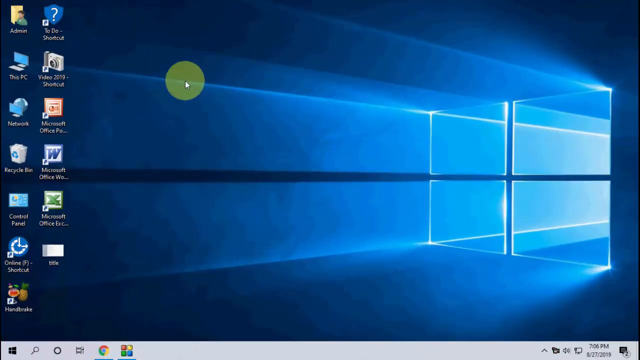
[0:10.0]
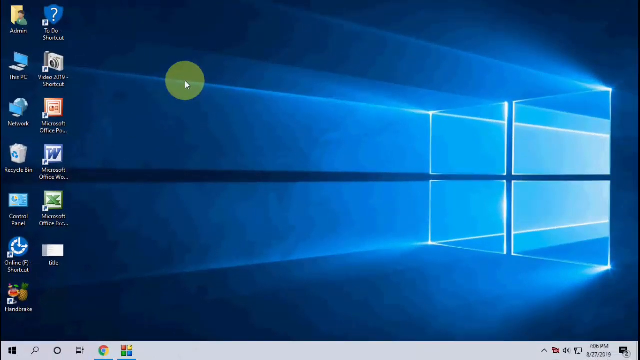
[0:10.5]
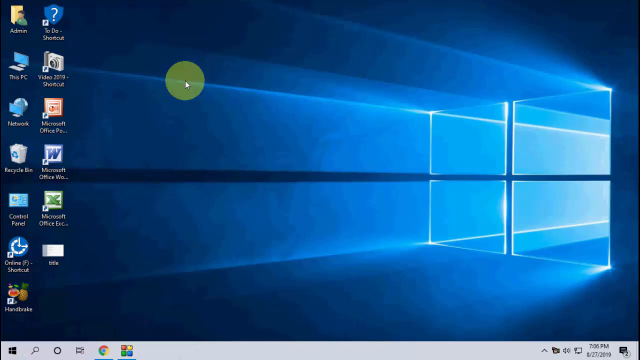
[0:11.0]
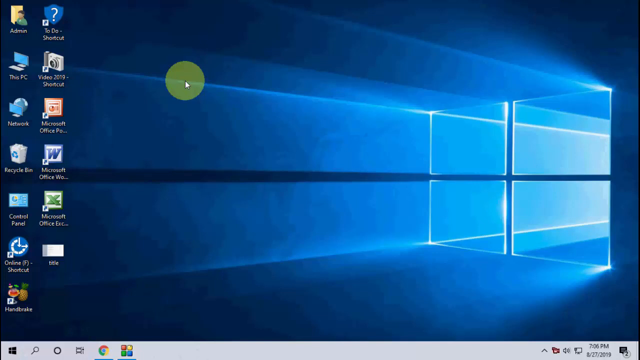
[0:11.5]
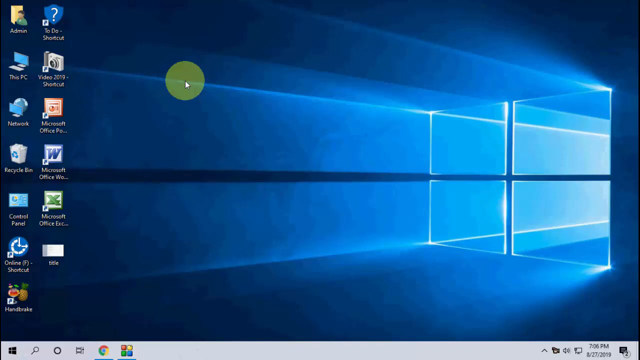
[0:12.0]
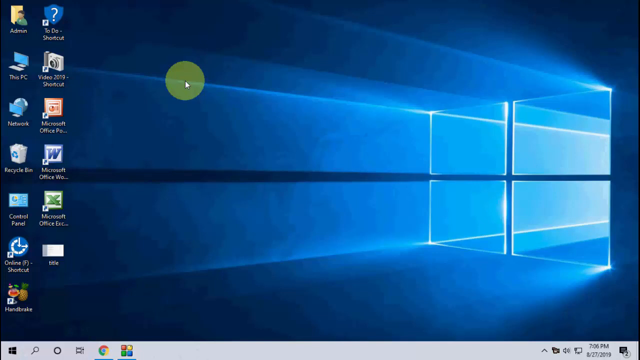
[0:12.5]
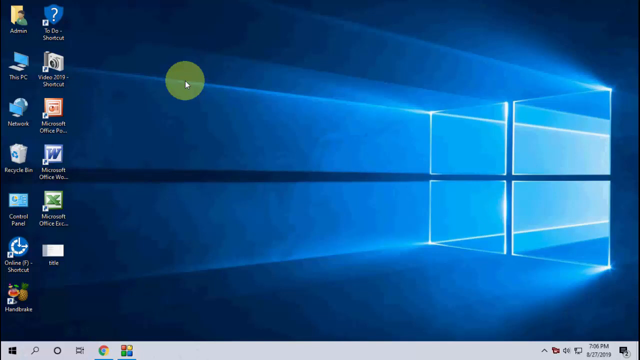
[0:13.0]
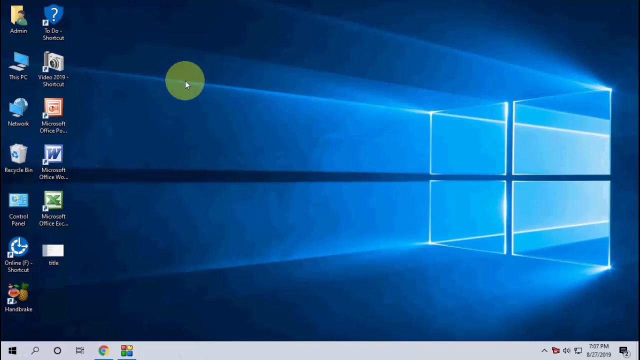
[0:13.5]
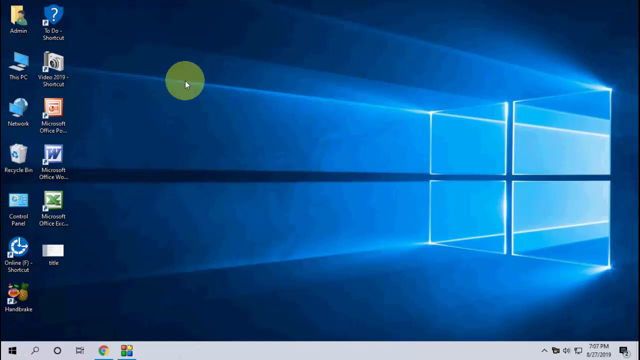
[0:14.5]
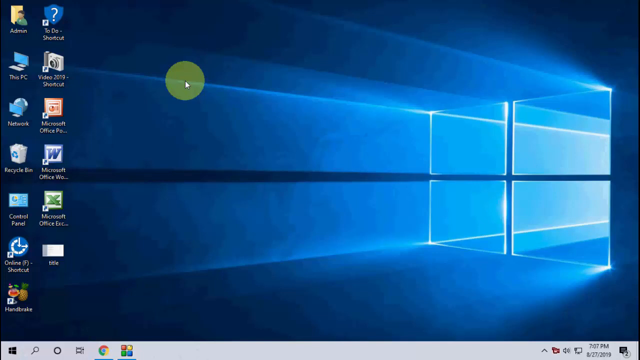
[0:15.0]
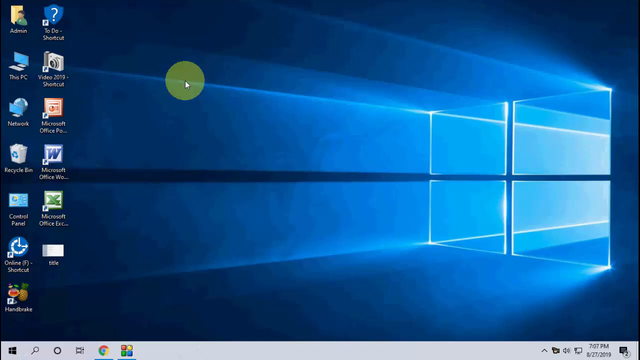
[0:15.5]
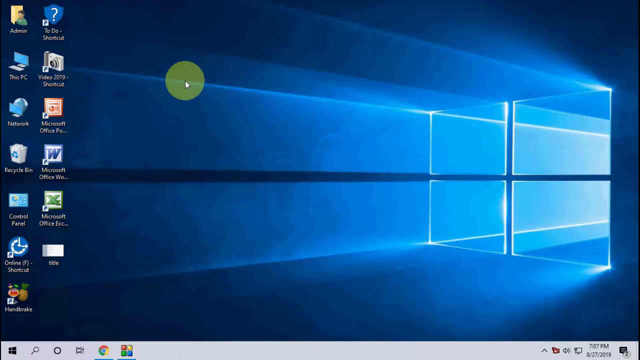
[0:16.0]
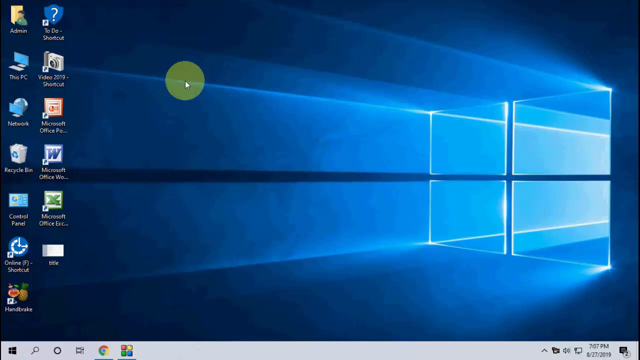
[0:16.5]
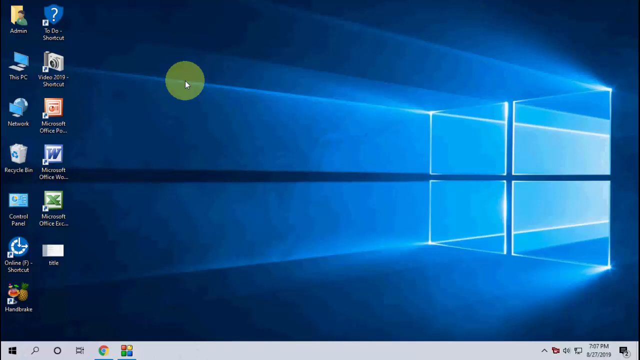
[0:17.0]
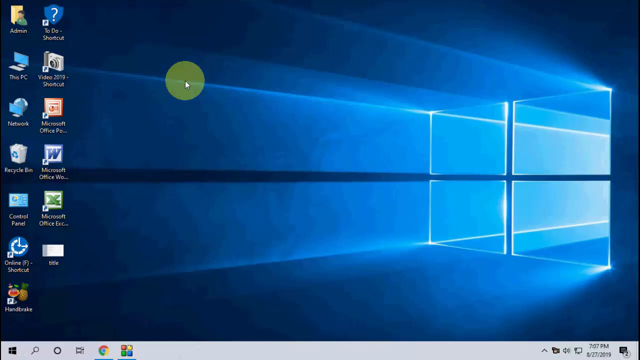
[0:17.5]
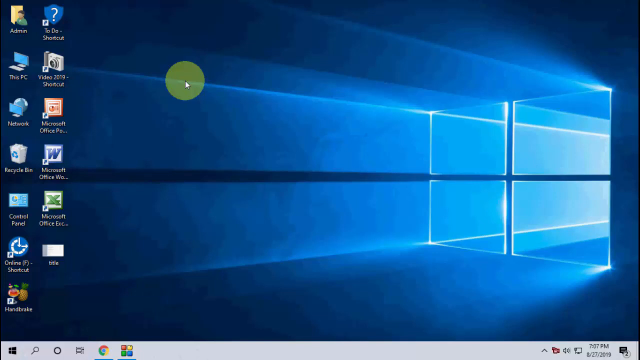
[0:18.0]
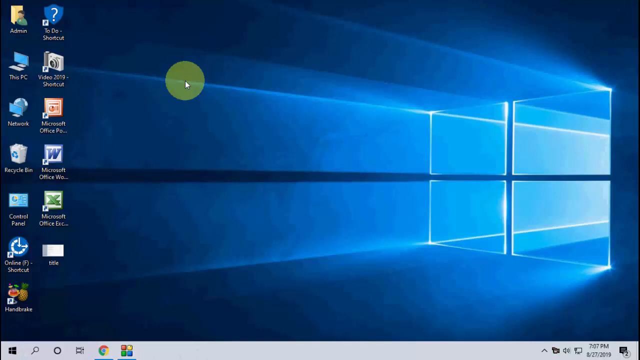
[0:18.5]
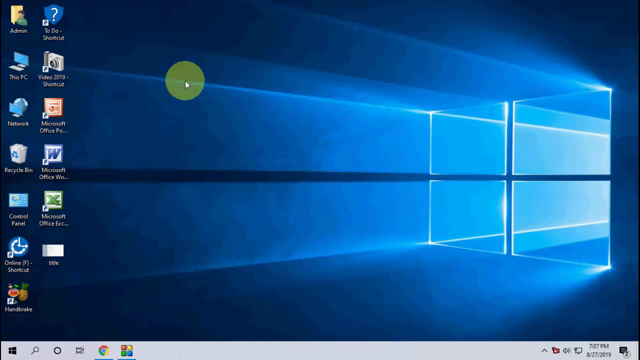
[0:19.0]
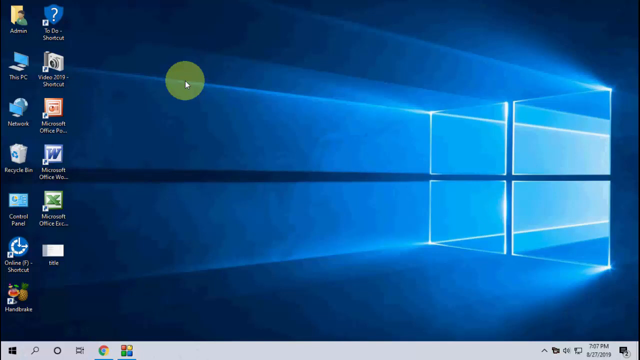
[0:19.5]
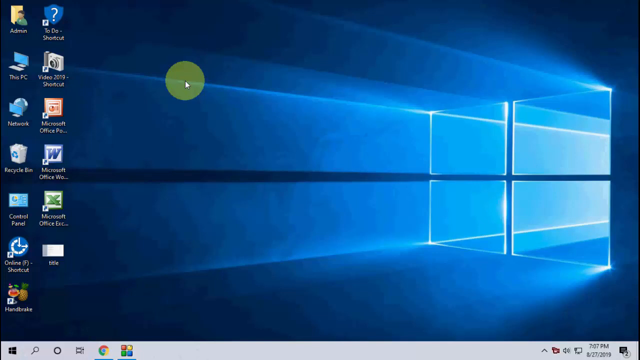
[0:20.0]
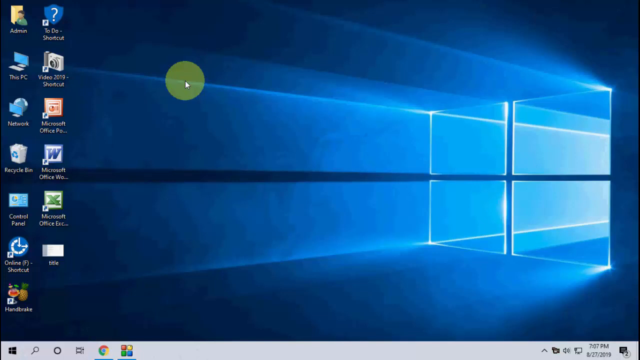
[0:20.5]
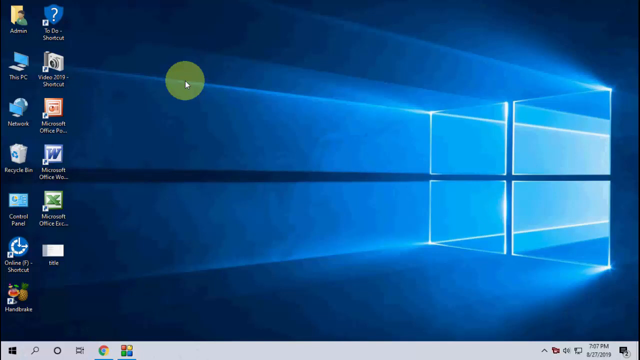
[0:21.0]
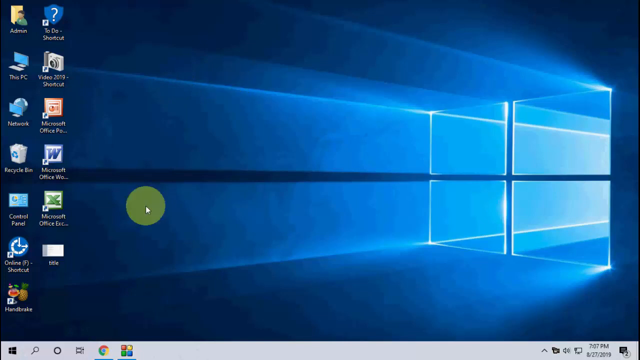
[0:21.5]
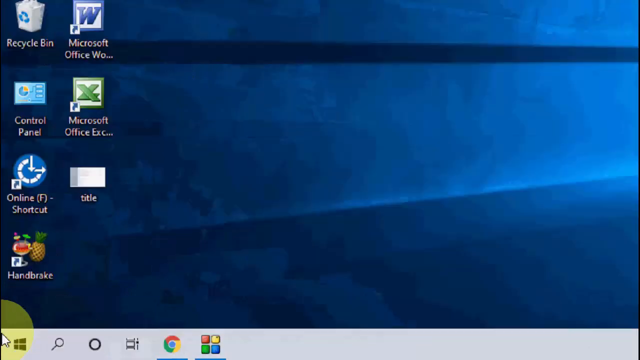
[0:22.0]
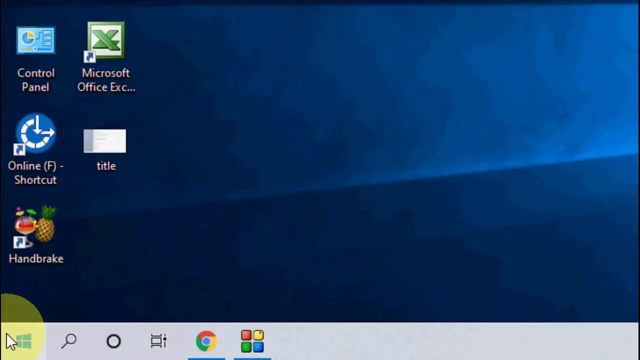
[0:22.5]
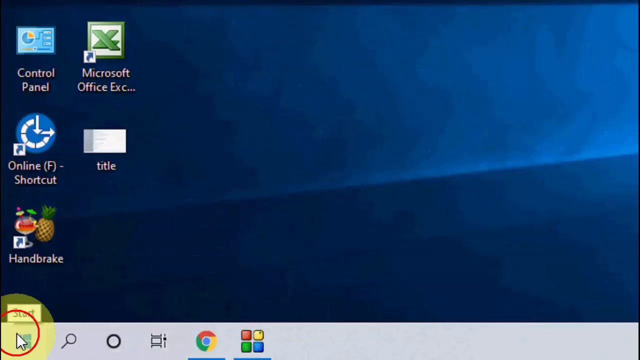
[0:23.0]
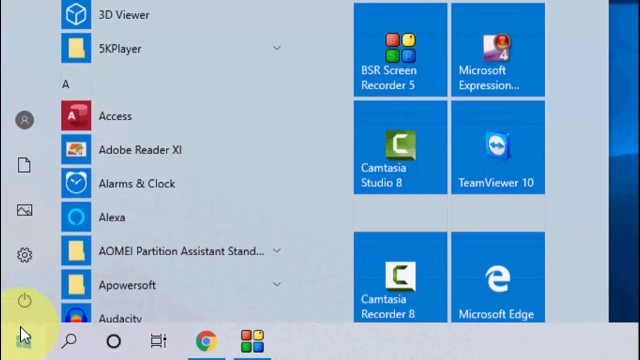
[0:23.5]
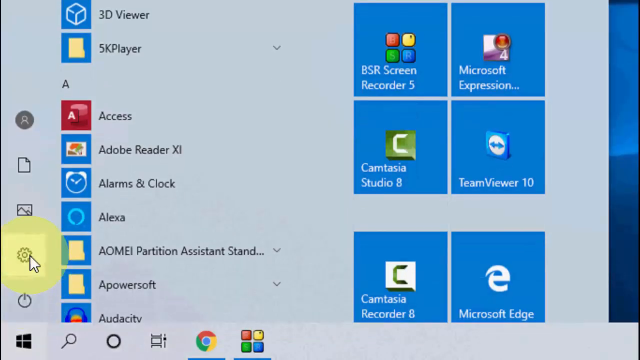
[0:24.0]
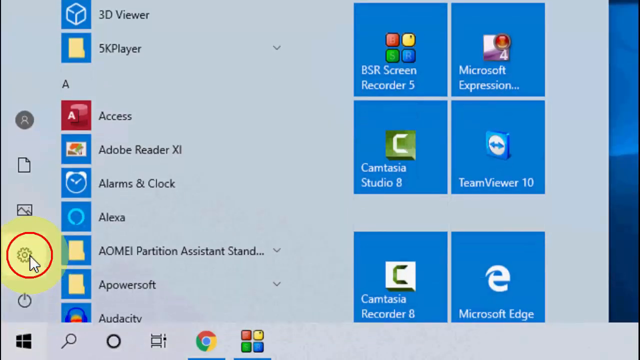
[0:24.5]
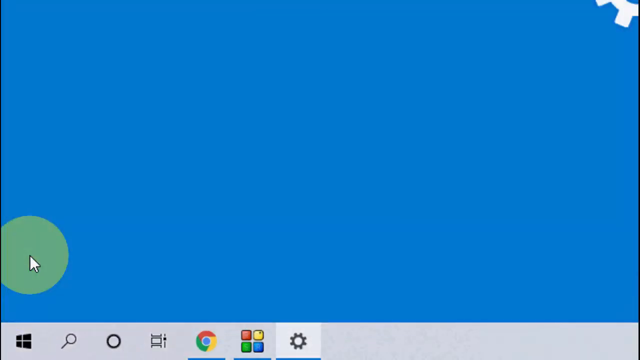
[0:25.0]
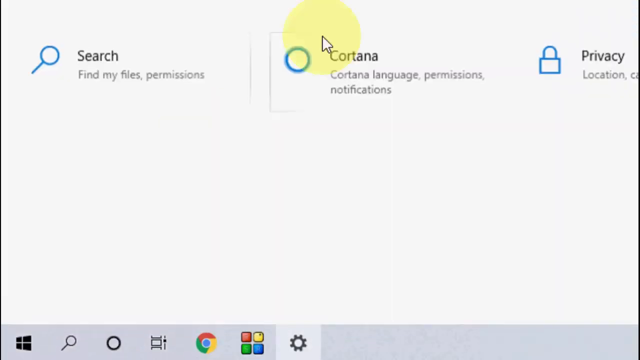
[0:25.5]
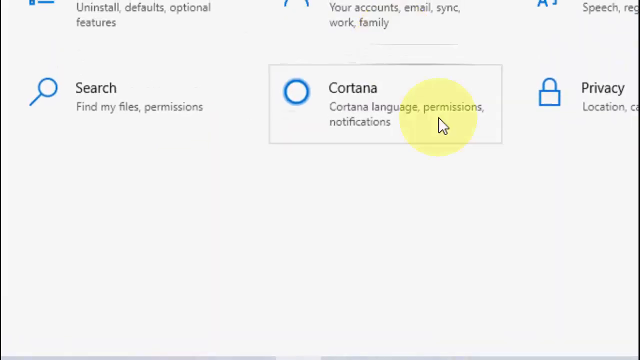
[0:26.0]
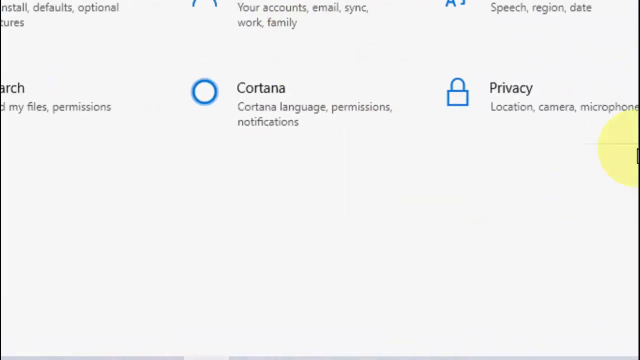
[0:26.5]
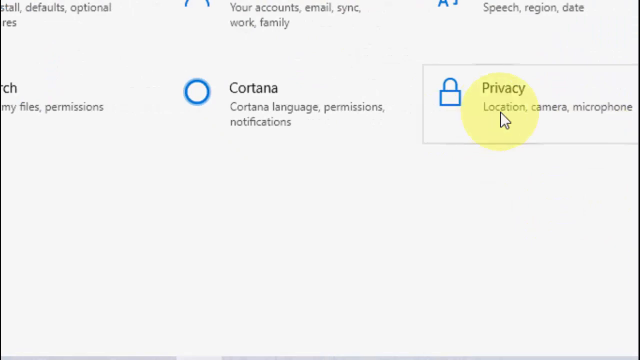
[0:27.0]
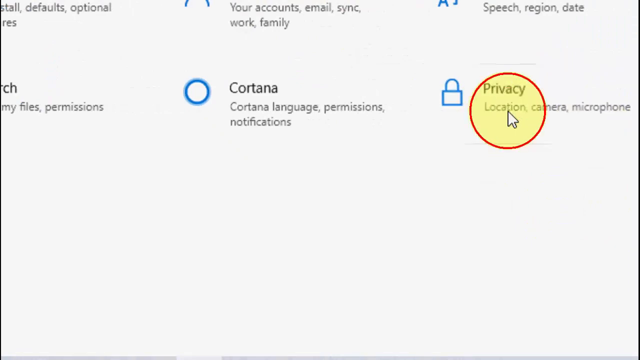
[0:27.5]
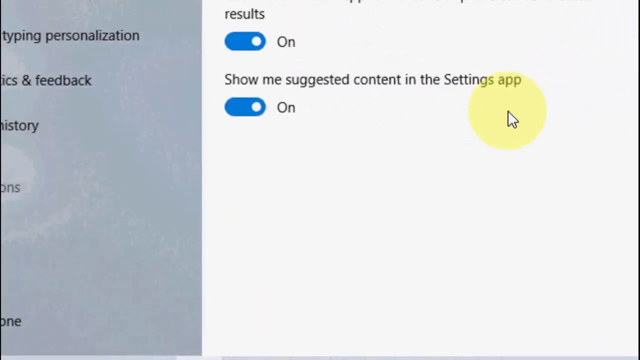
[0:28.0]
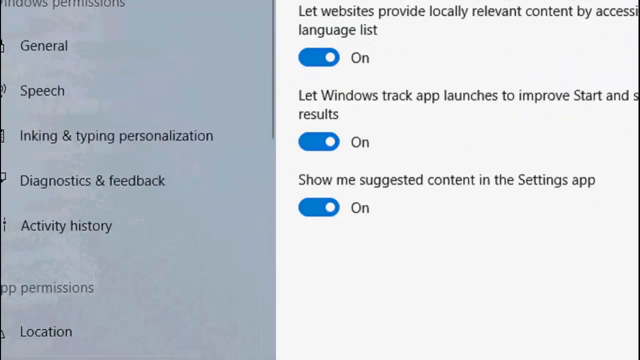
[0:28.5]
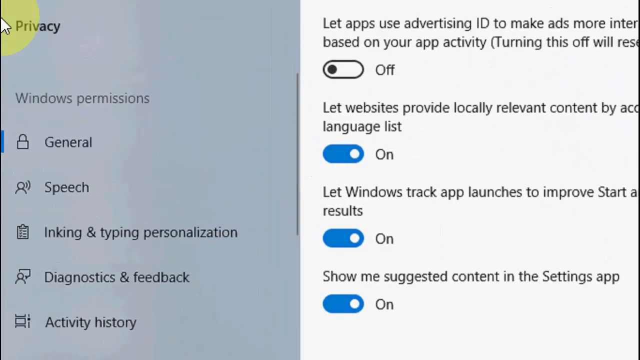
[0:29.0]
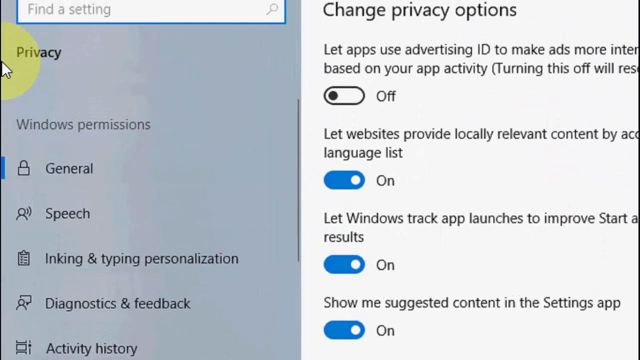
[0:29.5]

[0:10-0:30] A computer desktop has a Windows logo as its background and two rows of icons running from top to bottom on the left-hand side of the screen; the first row has seven icons and the second has six. A pointer showing where the mouse is, surrounded by a green circle, appears on the screen. After a few seconds it moves down to the bottom left-hand corner and clicks the Start button. The scene changes to a close-up of the Start button options, and the cursor moves up and clicks the gear icon, which usually means settings. The screen changes to a page with various options; the visible ones are Search, Cortona and Privacy. The cursor and the screen shift a little to the right, the Privacy option becomes clearer, and the cursor clicks on it. A new screen shows "Show me suggested content on the Settings app". The cursor shifts to the left and the whole screen shifts left as well, revealing more options. The top says "Privacy", and the cursor drags down just before the shot ends.